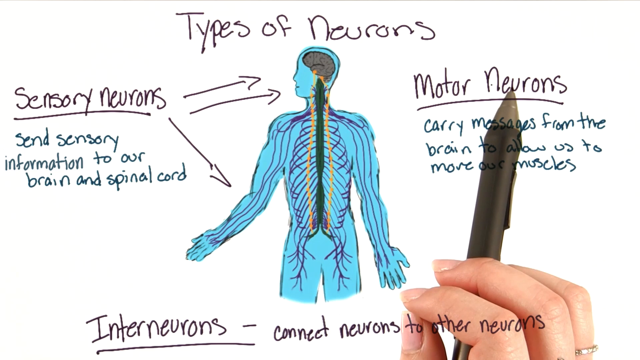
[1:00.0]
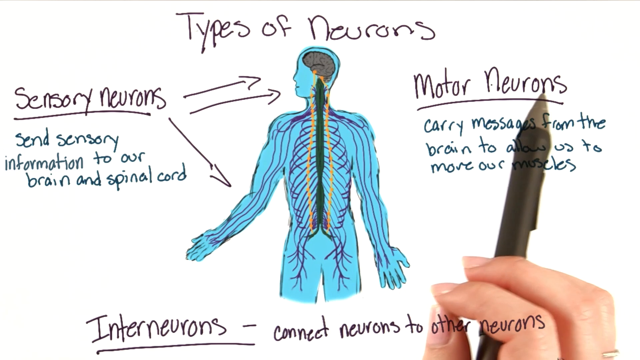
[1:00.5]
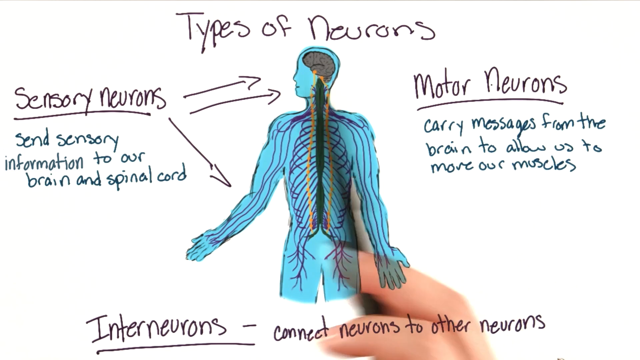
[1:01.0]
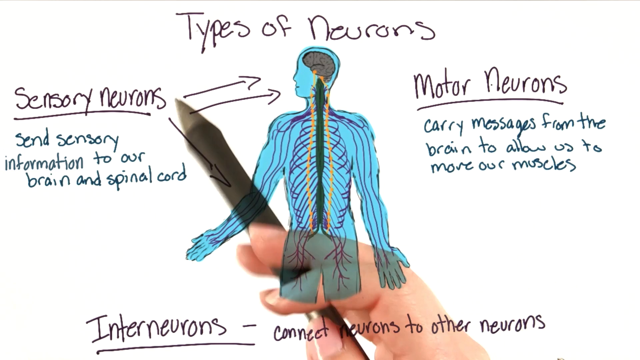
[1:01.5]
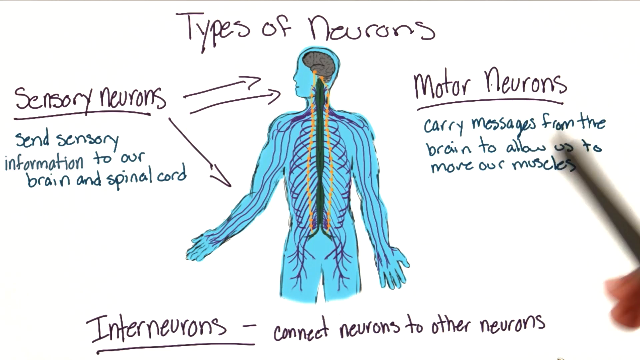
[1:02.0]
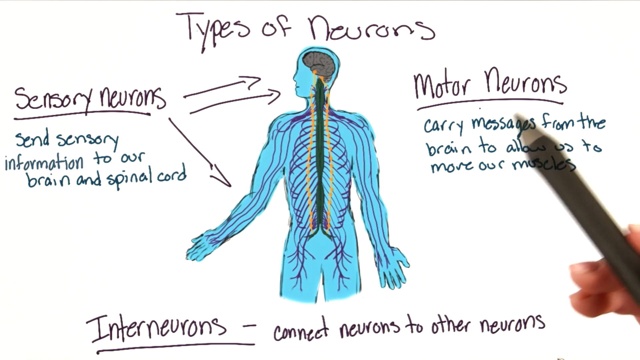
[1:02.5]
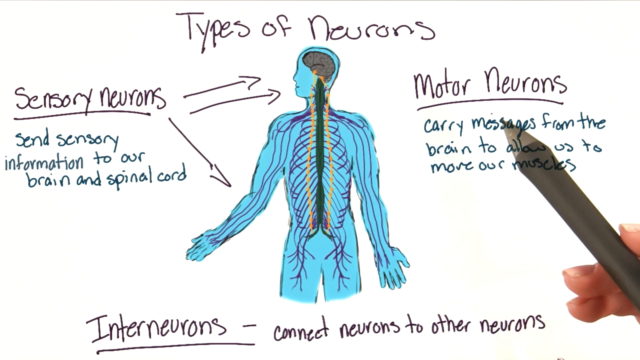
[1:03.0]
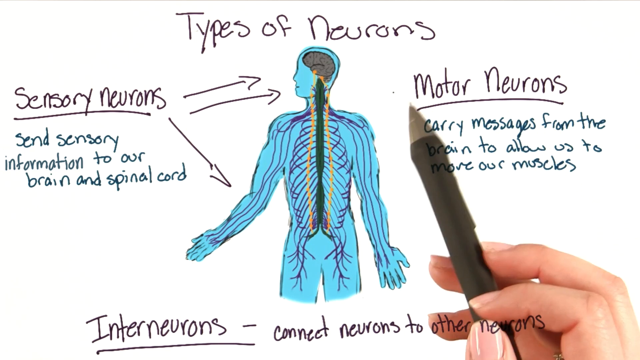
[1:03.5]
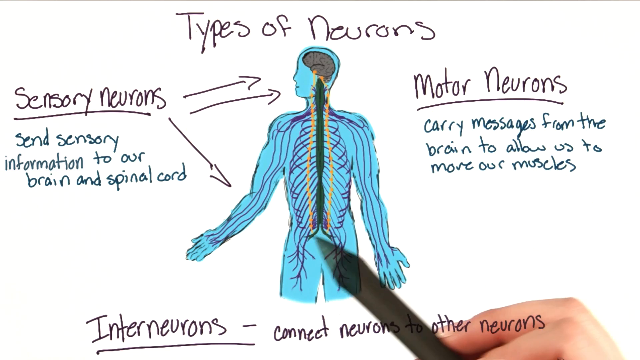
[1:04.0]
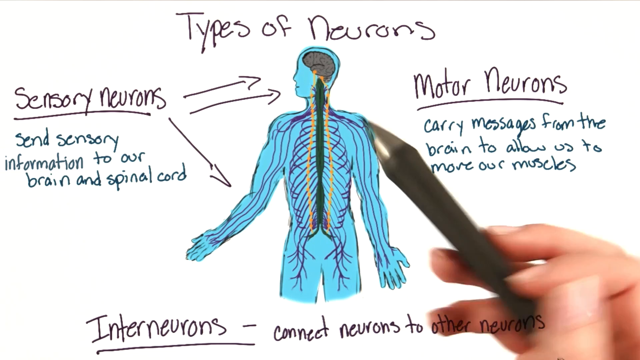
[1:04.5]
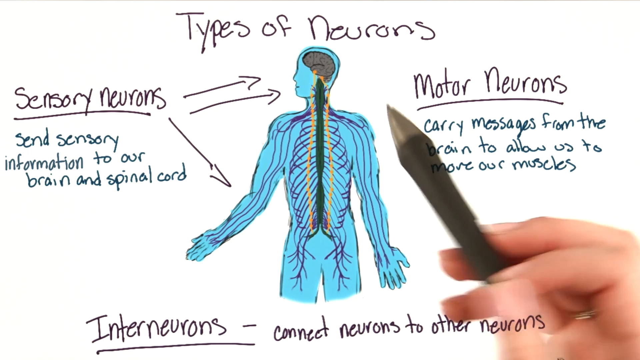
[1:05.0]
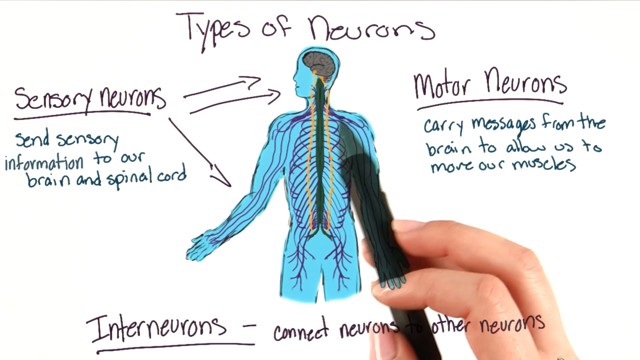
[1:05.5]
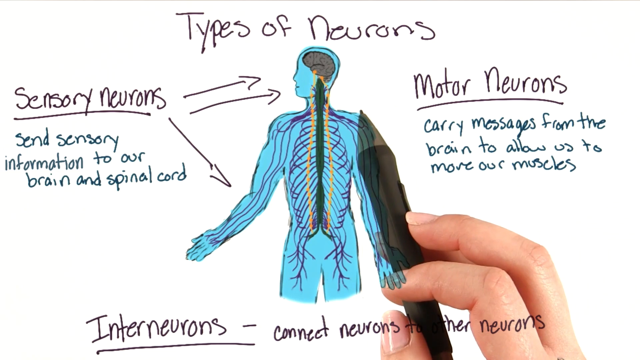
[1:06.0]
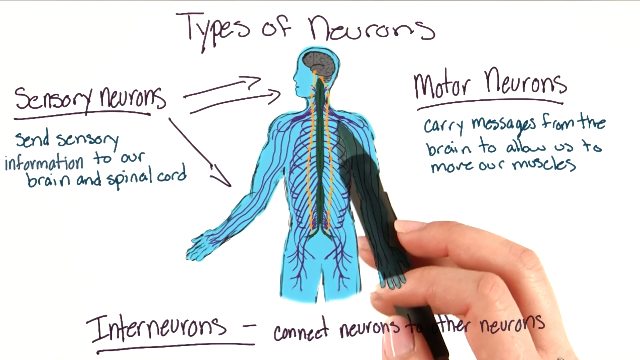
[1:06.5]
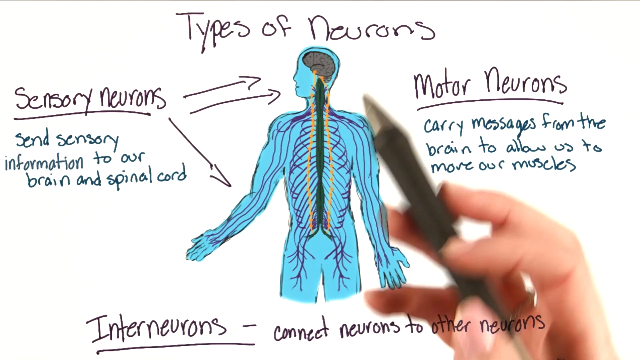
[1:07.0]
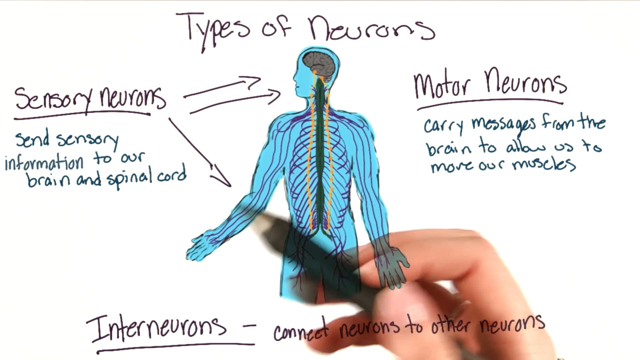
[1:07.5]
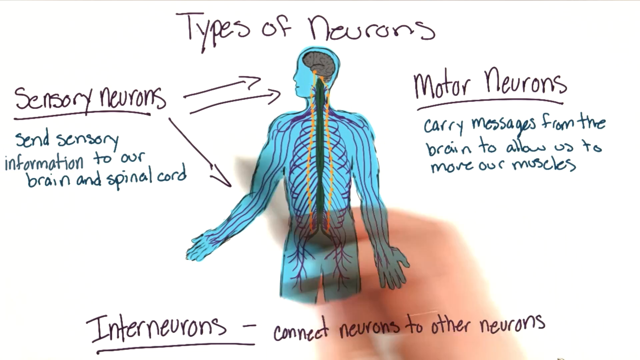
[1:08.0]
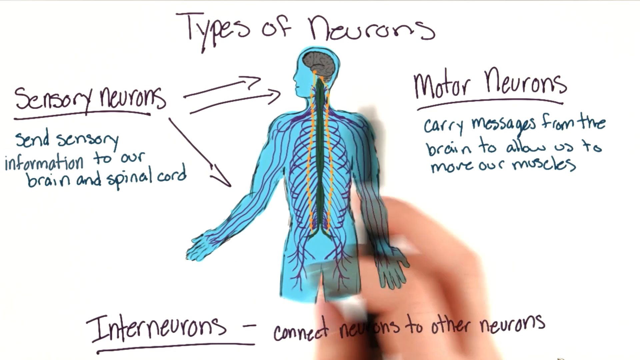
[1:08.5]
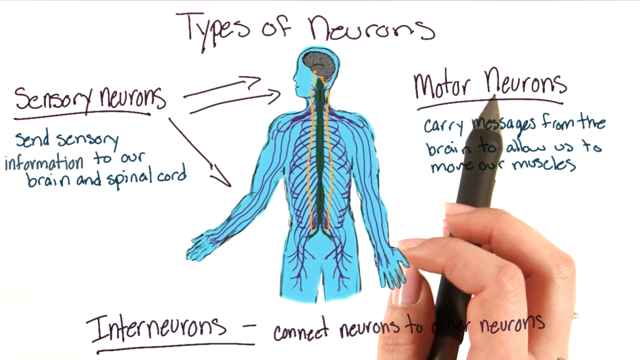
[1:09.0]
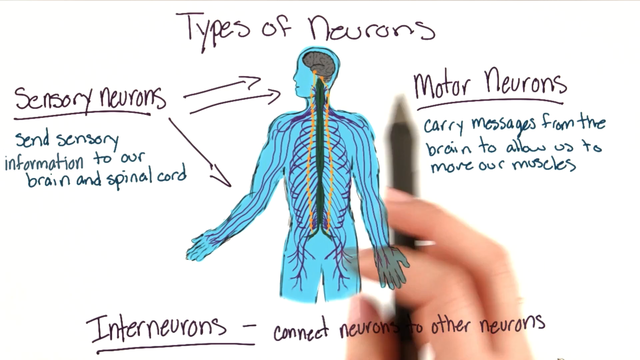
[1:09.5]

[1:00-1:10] The pen moves back and forth over the message on the right, which says "motor neurons," underlined, and "carry messages from the brain to allow us to move our muscles." It points to and goes over the diagram of the blue figure, which faces left. Above the body is written "types of neurons," and on the left it says "sensory neurons," with arrows pointing to the head and one pointing to the bent-up arm on the left.